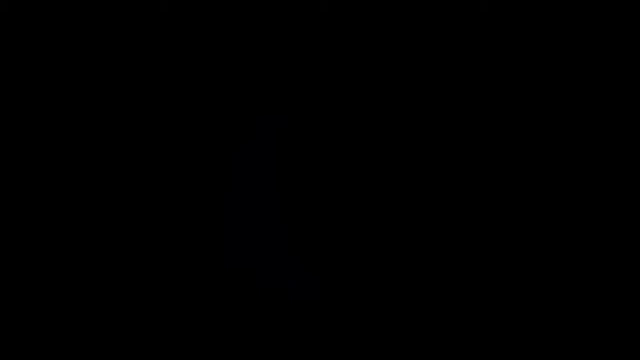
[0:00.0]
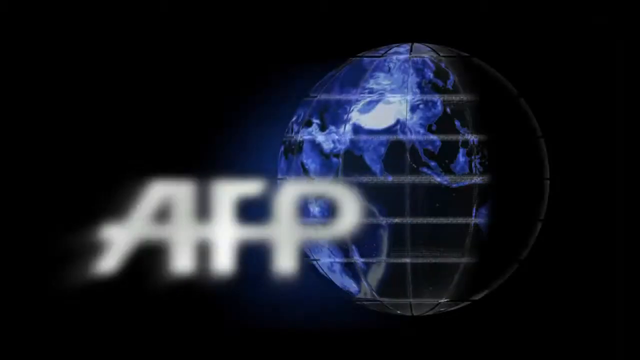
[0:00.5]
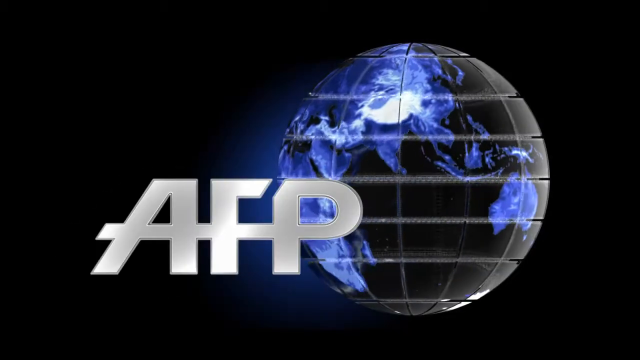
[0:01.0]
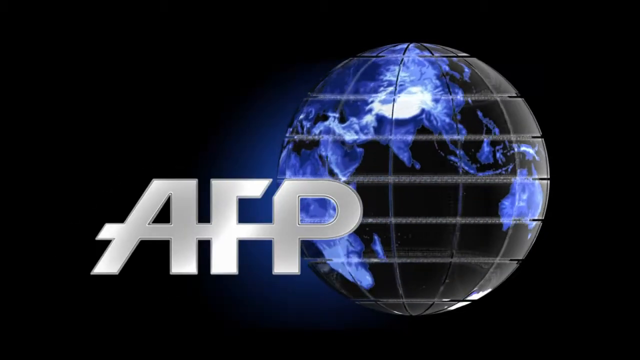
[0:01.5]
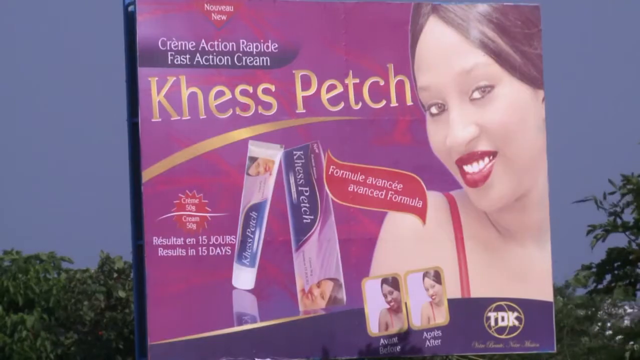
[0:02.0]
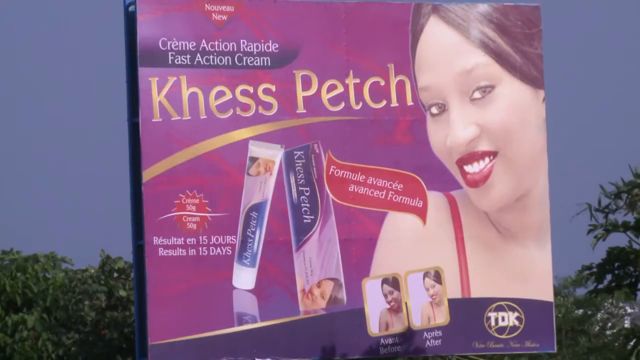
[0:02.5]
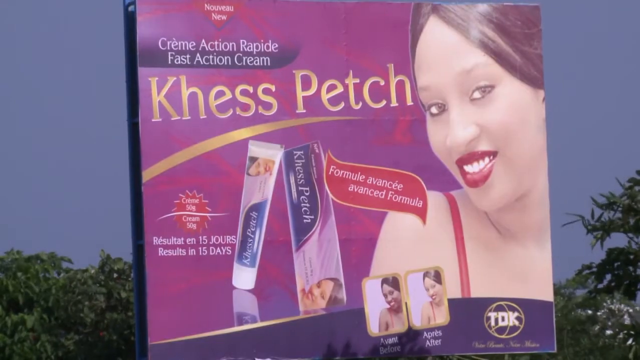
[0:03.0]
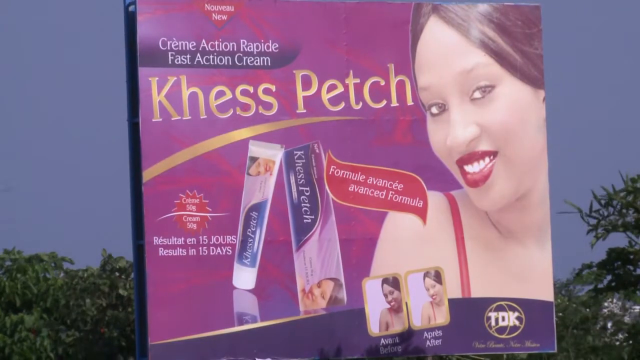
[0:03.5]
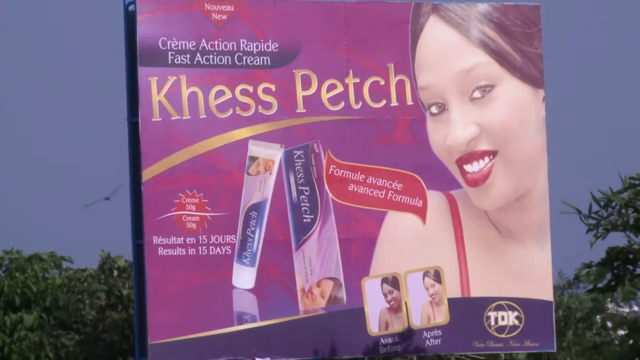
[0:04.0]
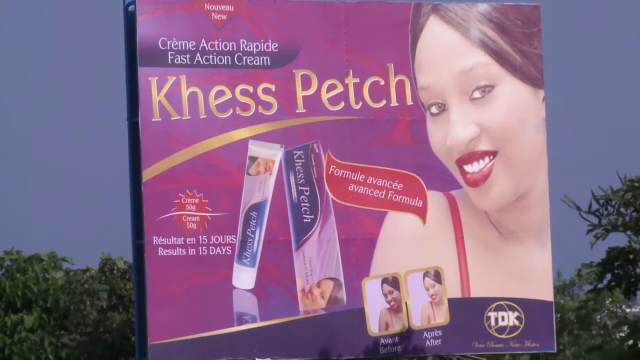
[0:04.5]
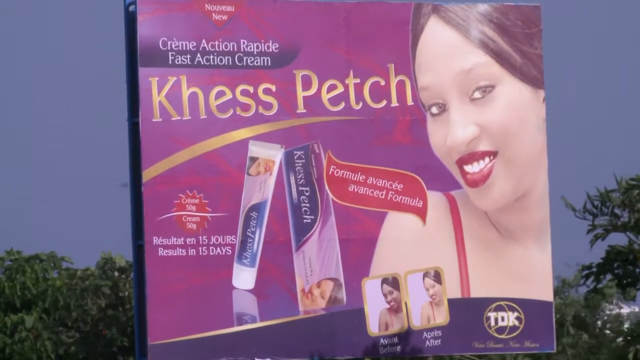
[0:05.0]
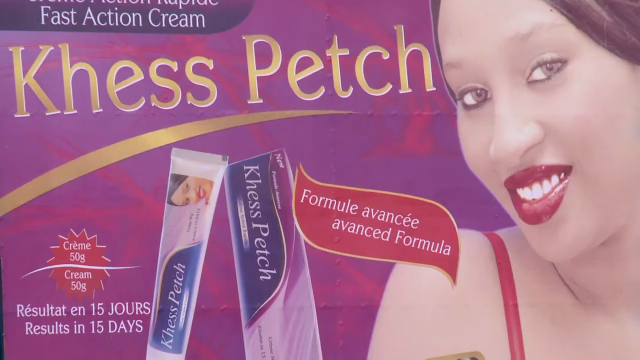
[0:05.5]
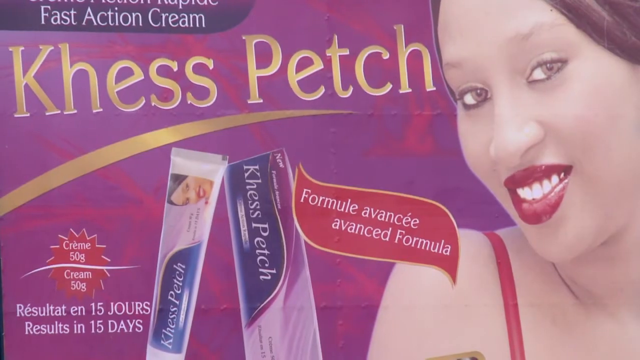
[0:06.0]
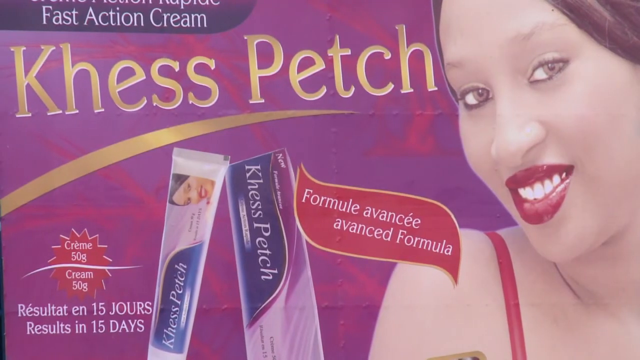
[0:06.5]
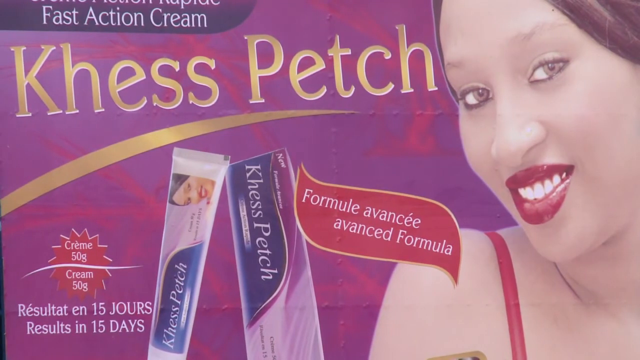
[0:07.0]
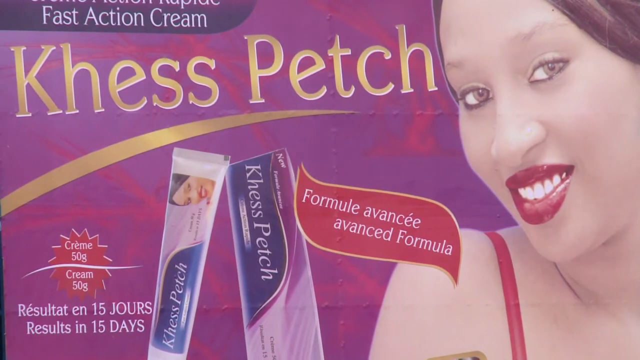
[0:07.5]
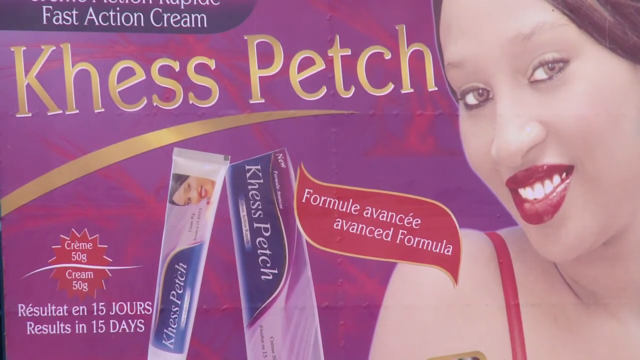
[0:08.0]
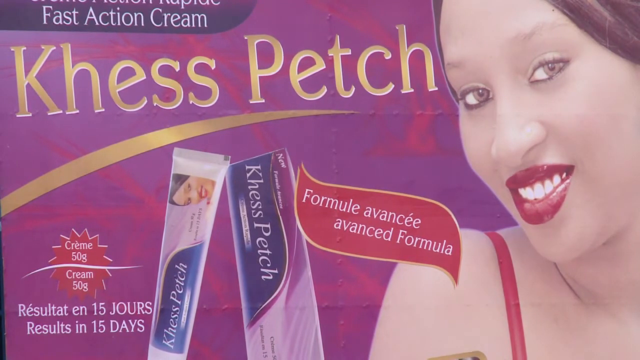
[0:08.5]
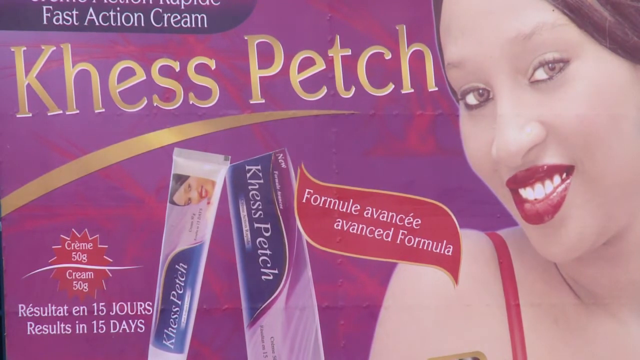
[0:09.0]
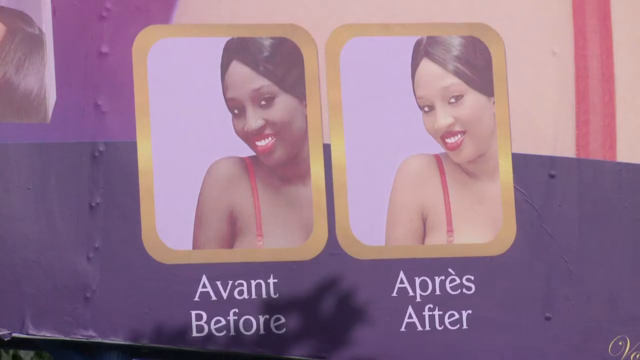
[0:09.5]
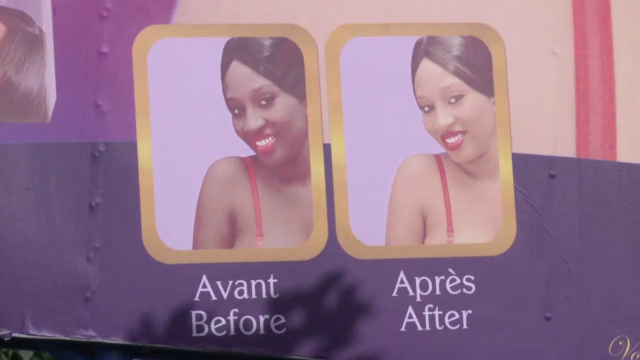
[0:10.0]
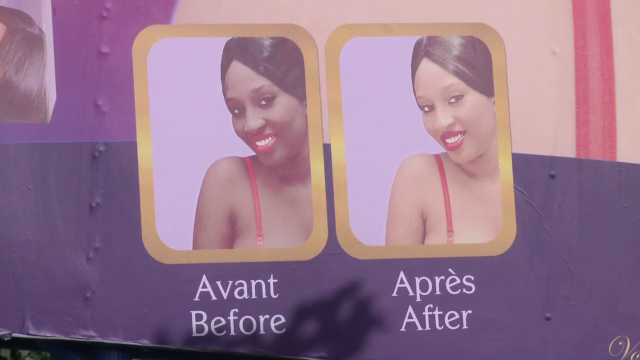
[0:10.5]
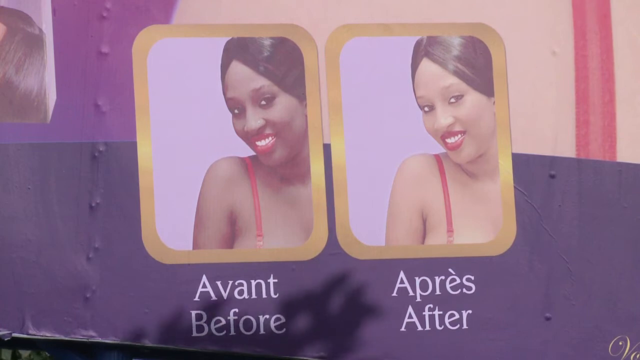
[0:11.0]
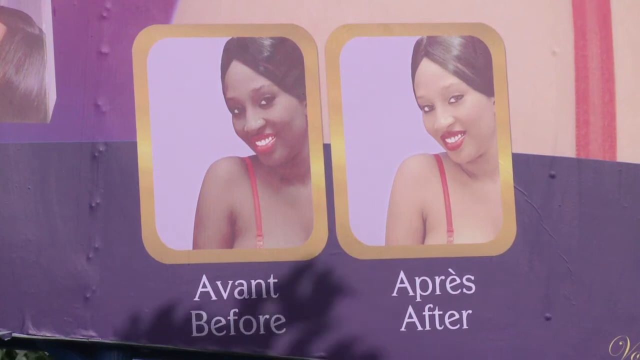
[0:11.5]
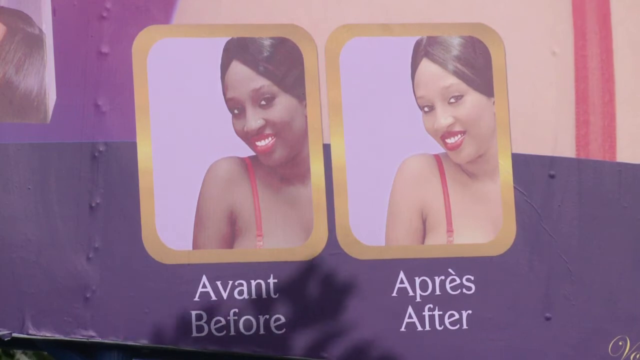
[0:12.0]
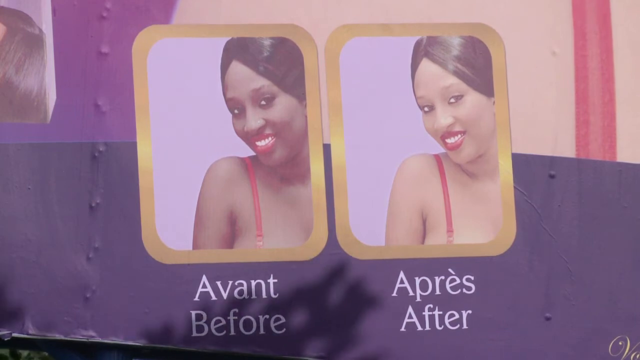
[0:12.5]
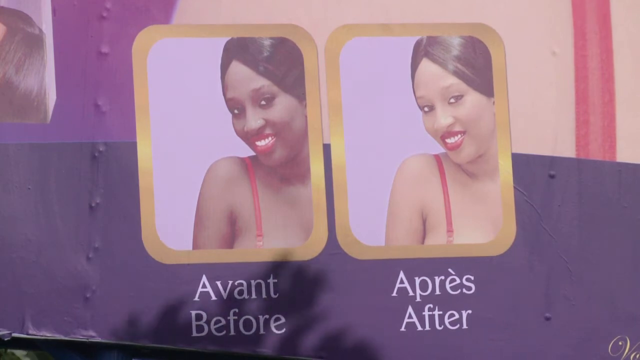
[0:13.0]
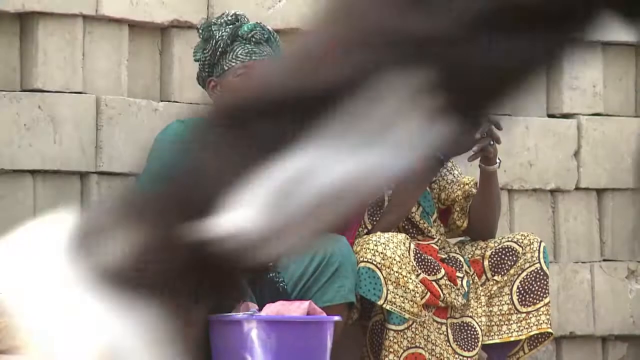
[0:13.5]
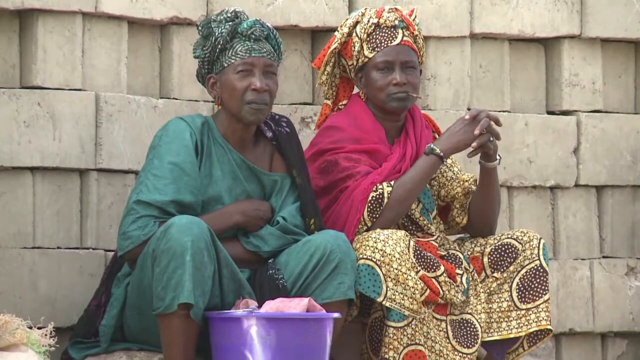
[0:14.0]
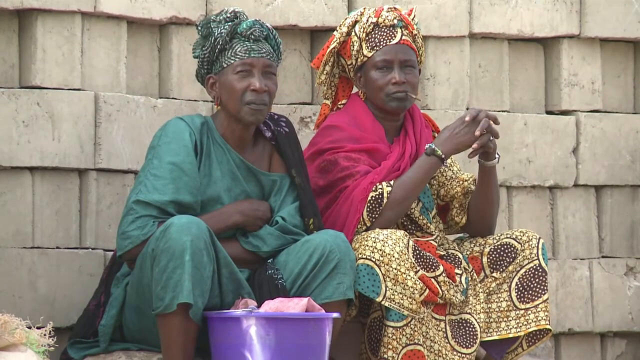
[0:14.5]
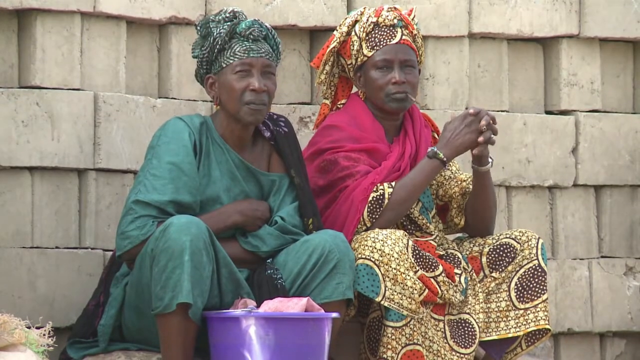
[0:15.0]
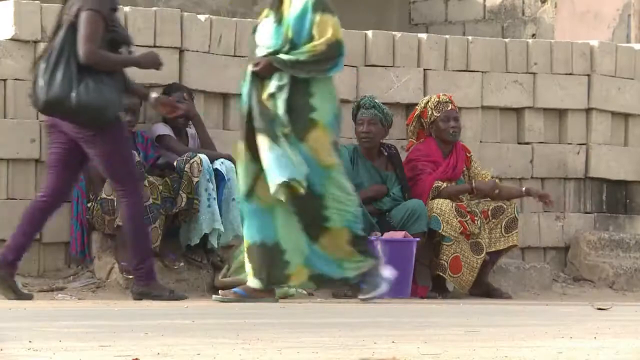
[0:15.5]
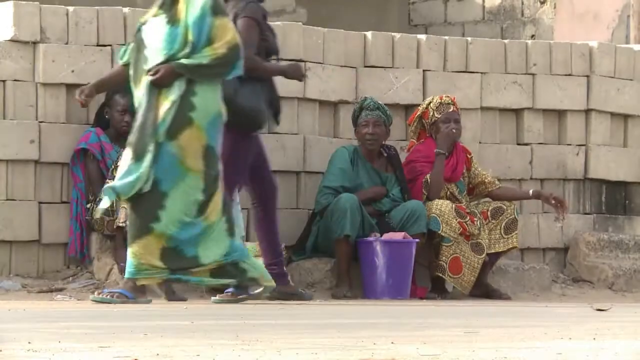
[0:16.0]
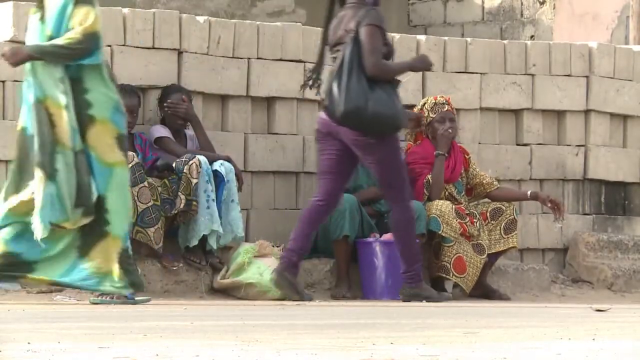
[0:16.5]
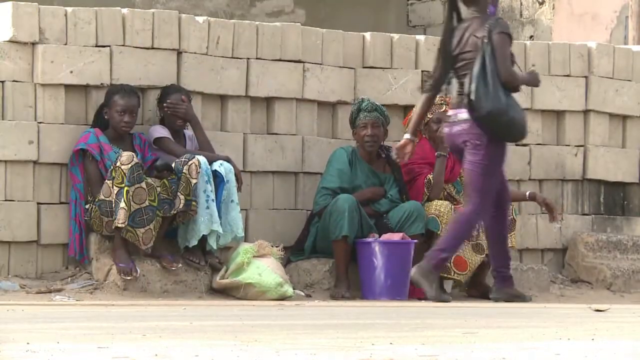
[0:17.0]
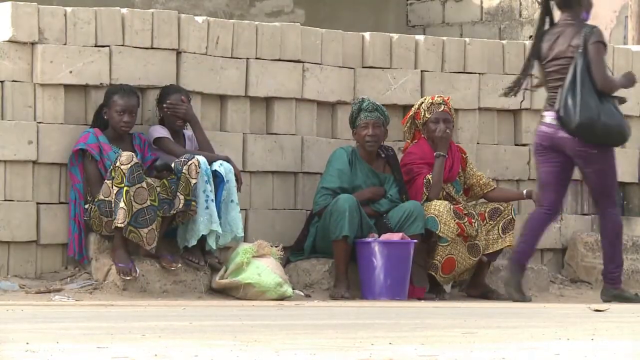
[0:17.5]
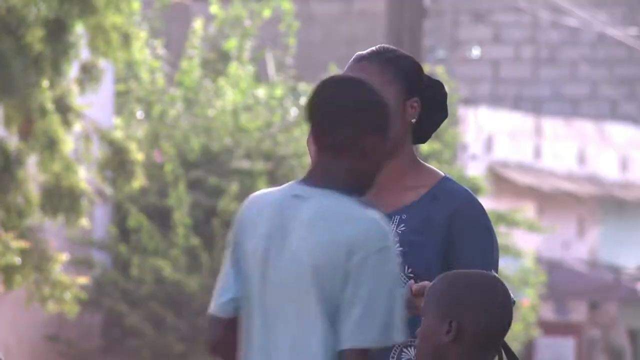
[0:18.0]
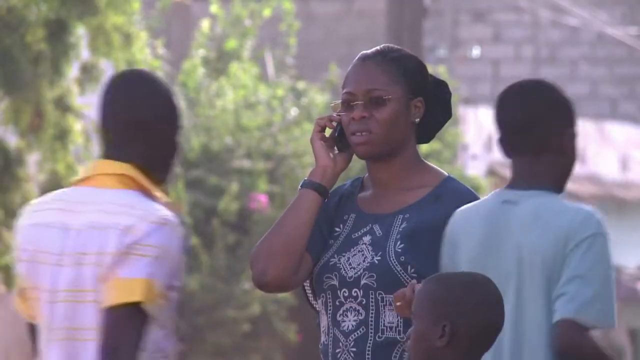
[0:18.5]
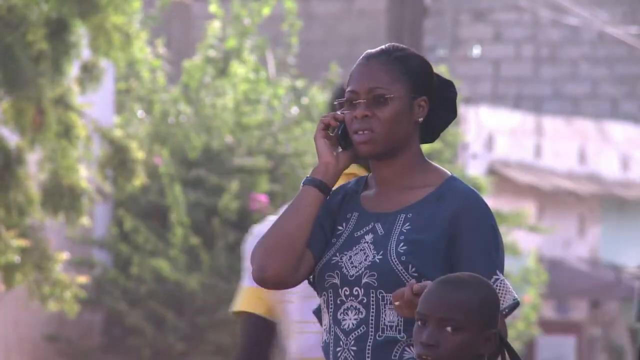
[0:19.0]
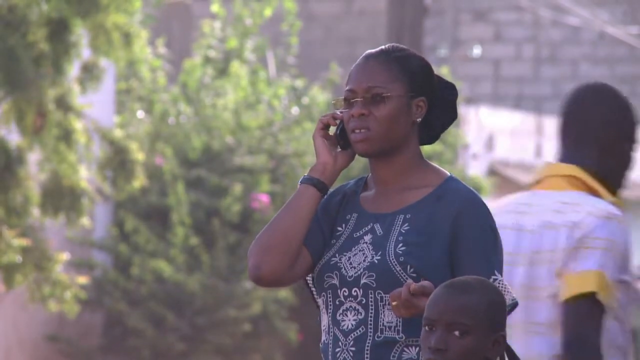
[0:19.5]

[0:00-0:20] The AFP logo appears with a curved globe made of white lines spinning behind it. A billboard reads "chess patch" and shows a woman with red lipstick. It shows a cream with the text "cream action rapid fast action cream", along with the actual box, the tube of cream and, very small at the bottom, a before-and-after picture. The billboard is high up above the tree line, and the view is up close. The text reads "avant" for before and "apres" for after. The woman is Black, and she appears lighter-skinned in the after picture. Four Black women dressed in very colorful outfits sit in some dirt with pails in front of them, in front of a wall made of blocks. A Black woman is then seen on the phone.